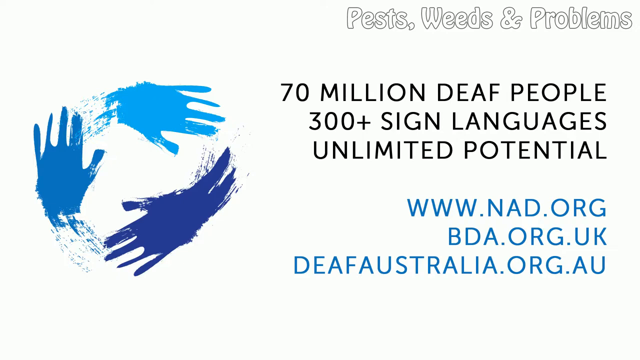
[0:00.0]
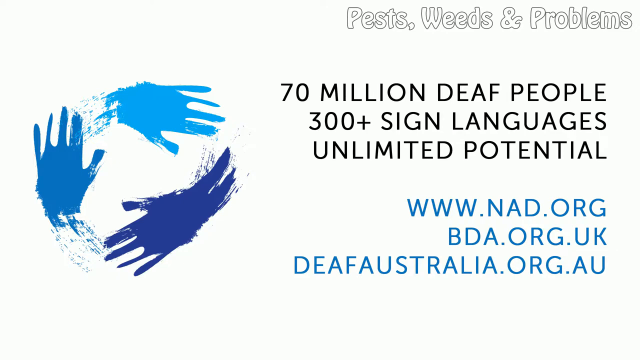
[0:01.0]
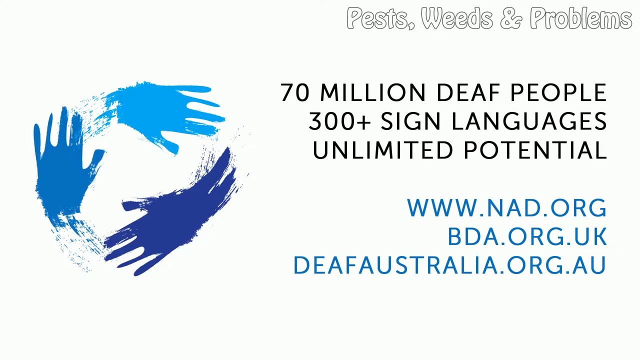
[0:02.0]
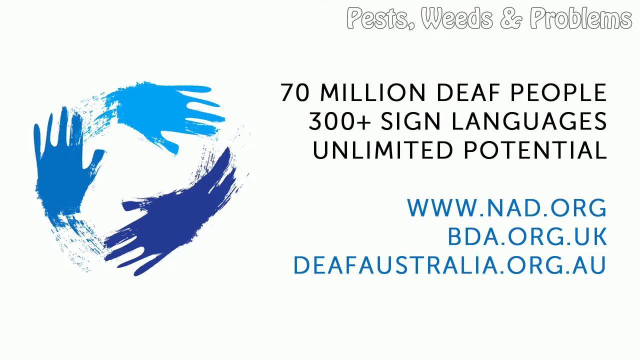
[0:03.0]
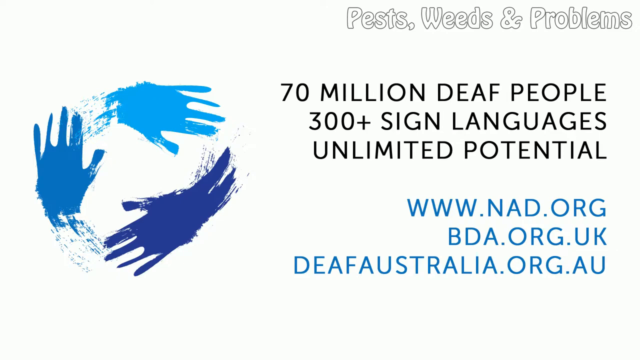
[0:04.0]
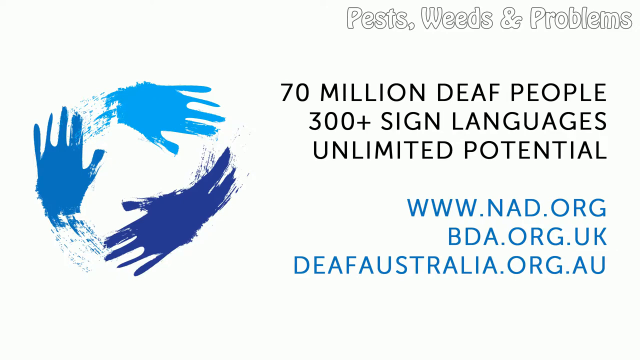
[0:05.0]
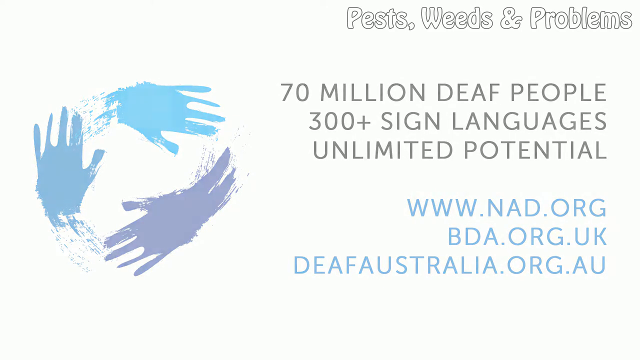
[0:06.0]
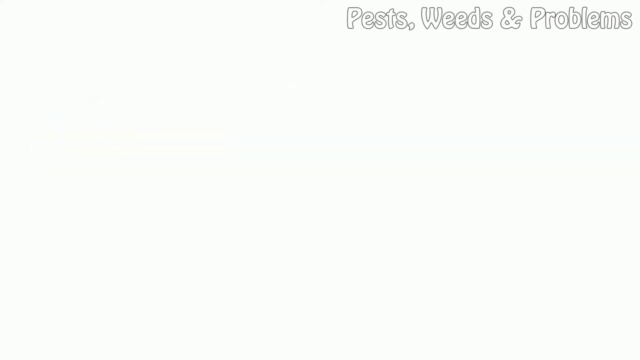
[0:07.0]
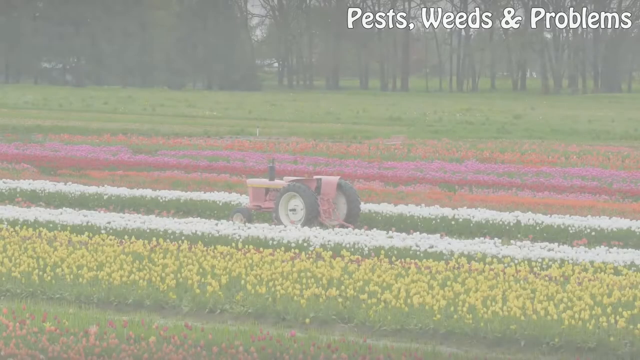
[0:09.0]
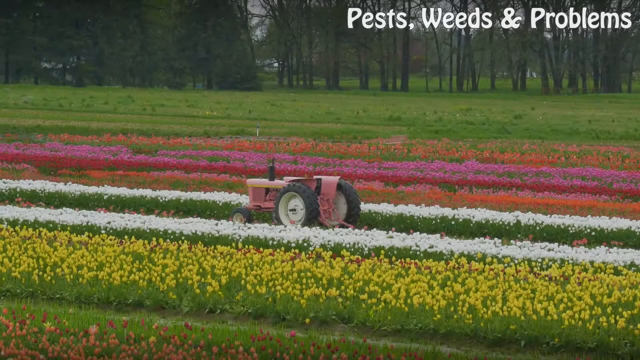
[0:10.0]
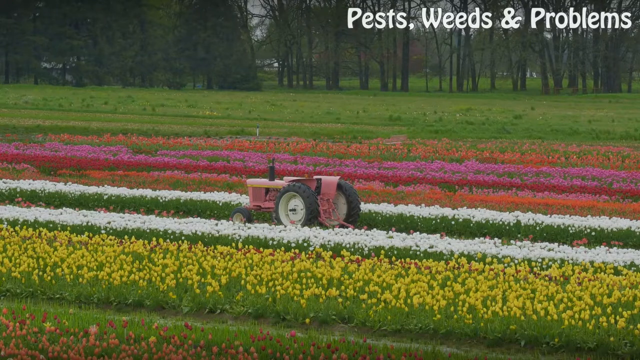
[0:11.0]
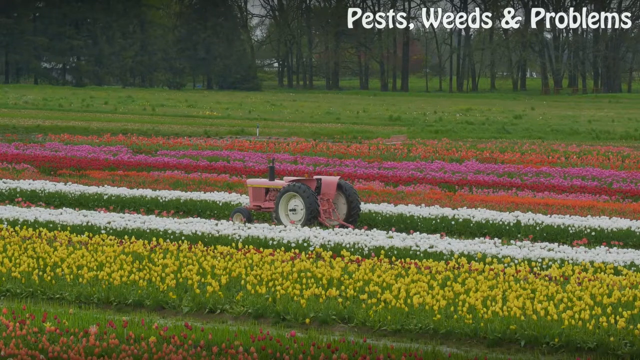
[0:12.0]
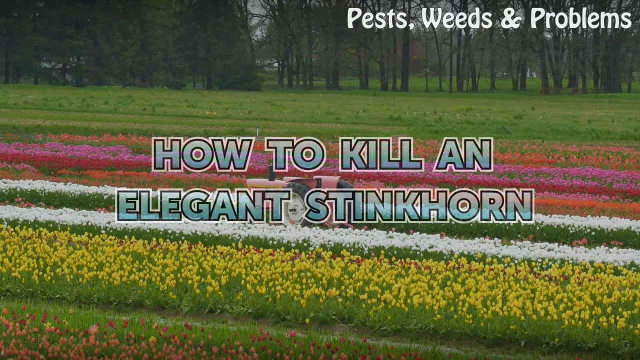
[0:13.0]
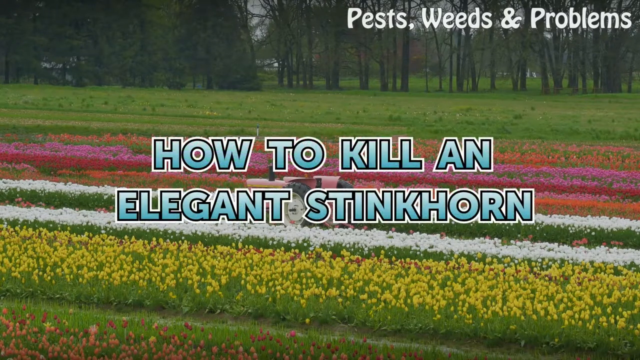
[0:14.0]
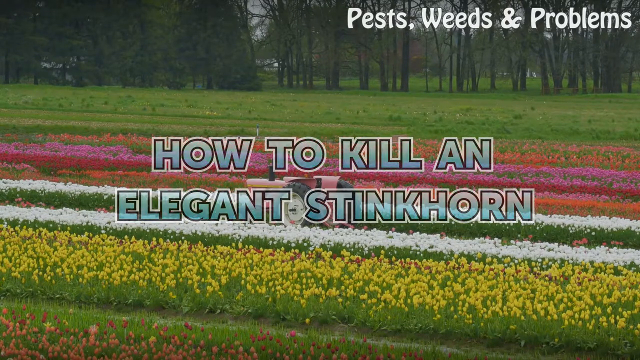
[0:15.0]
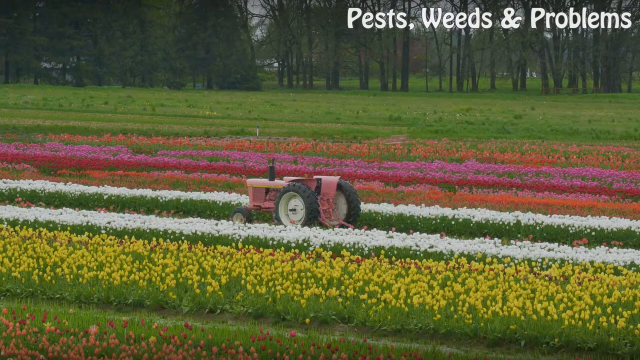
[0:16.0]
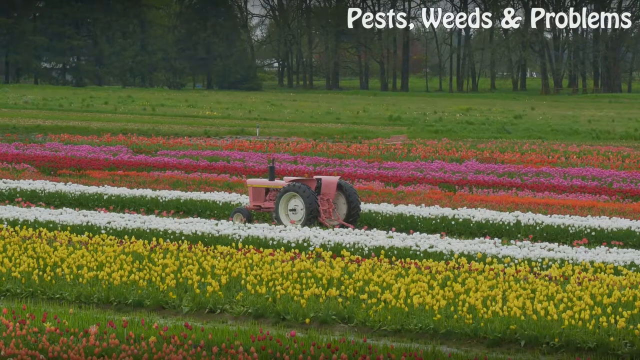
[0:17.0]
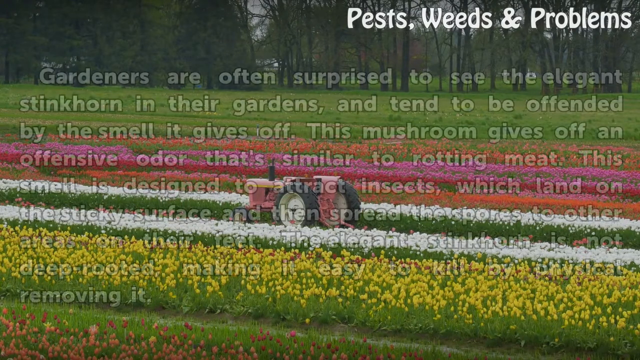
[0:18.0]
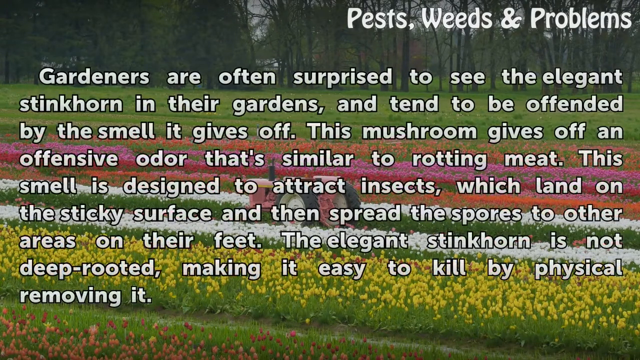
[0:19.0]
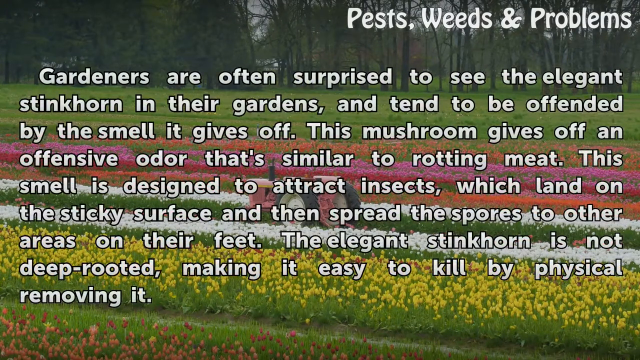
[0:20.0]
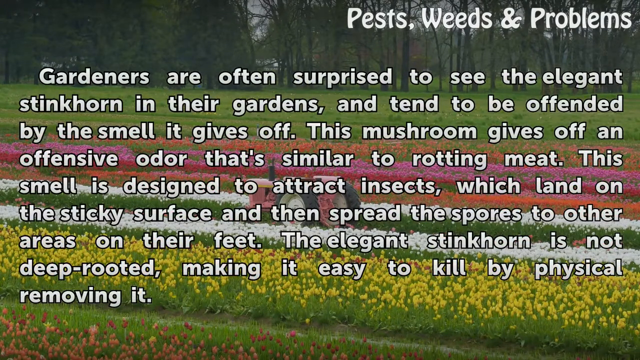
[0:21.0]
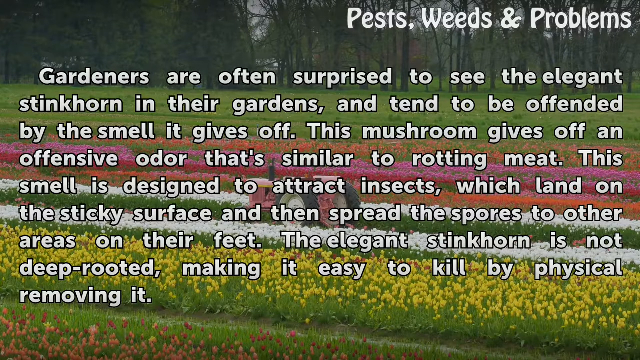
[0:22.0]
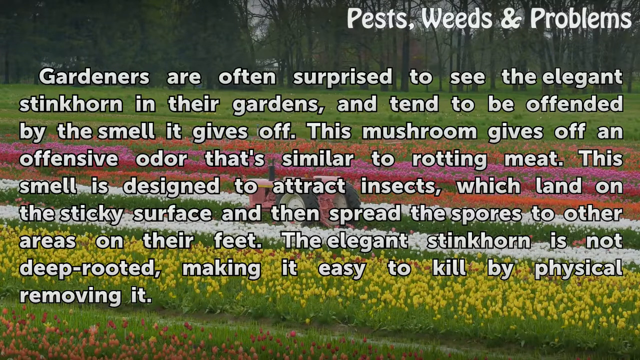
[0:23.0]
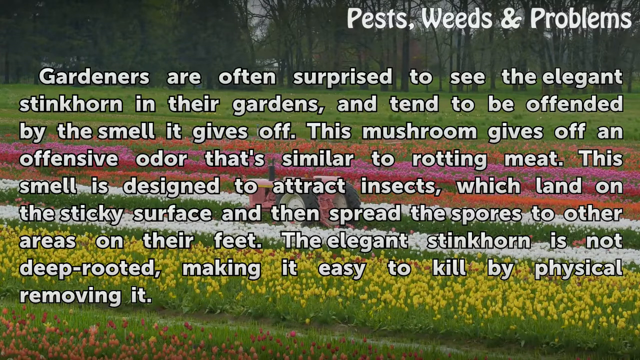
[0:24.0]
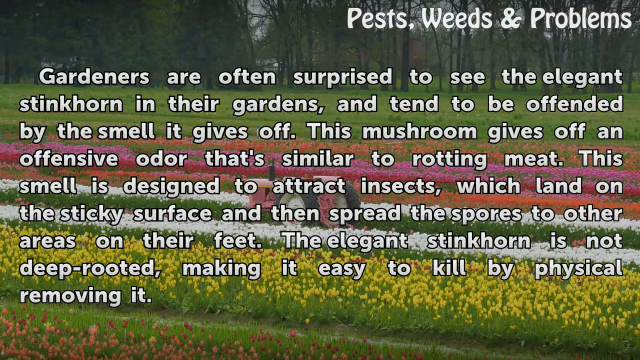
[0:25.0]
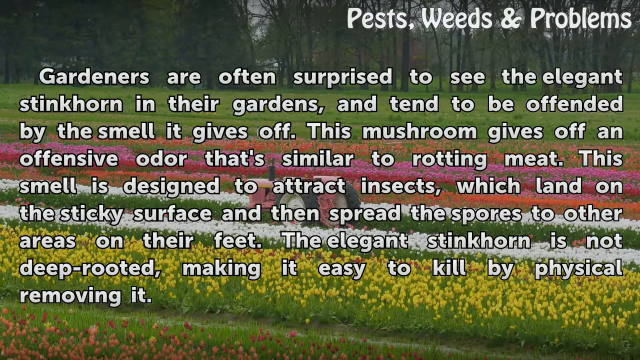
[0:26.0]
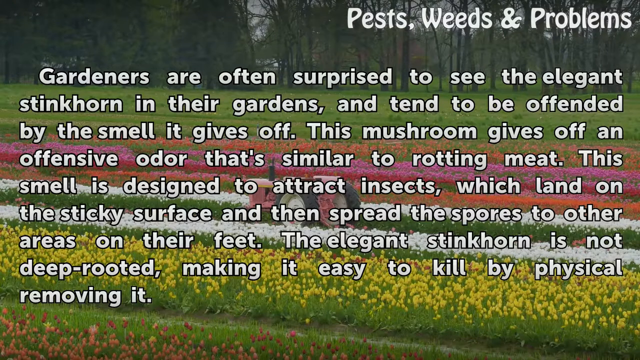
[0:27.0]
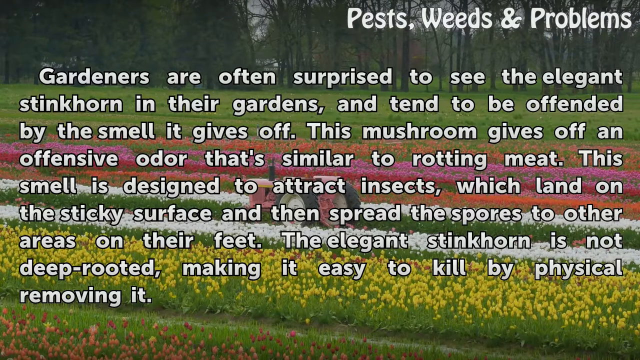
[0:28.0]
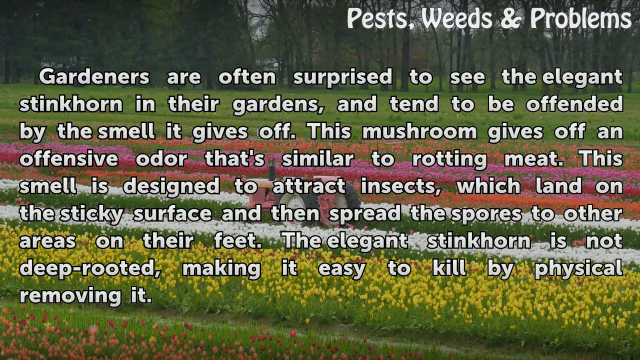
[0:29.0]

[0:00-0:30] The video opens on a white background with three blue printed hands arranged in a circle and the words "70 million deaf people, 300 plus sign languages, unlimited potential." Below that it reads "www.mad.org," and on the next line "bda.org.uk" and "deafaustralia.org.au." The scene then changes to a picture of a tractor in a garden with a lot of flowers. In the top corner the text reads "pests, weeds, and problems," along with "How to kill an elegant stink horn." White letters then appear over the view of the flowers: "Gardeners are often surprised to see an elegant stink horn in their gardens and tend to be offended by the smell it gives off. This mushroom gives off an offensive odor that's similar to rotting meat. The smell is designed to attract insects which land on the sticky surface and then spread the spores to other areas on their feet. The elegant stink horn is not deep-rooted making it easy to kill and physically remove."